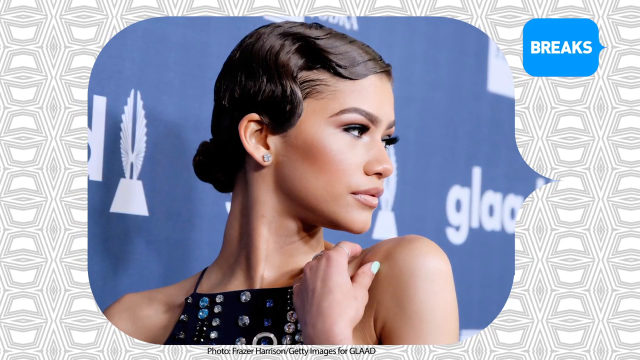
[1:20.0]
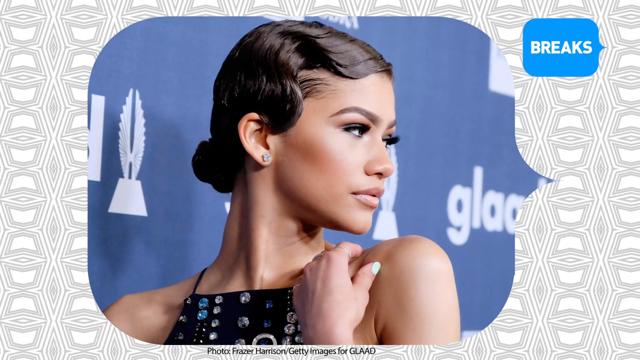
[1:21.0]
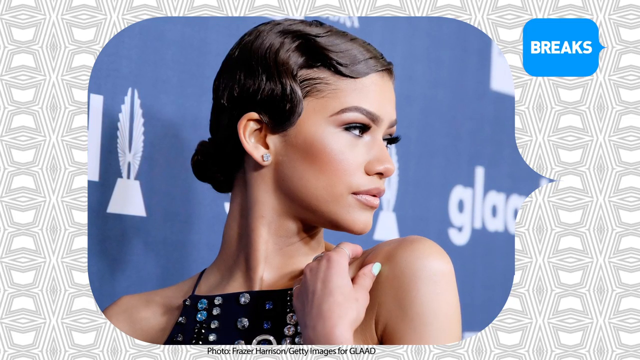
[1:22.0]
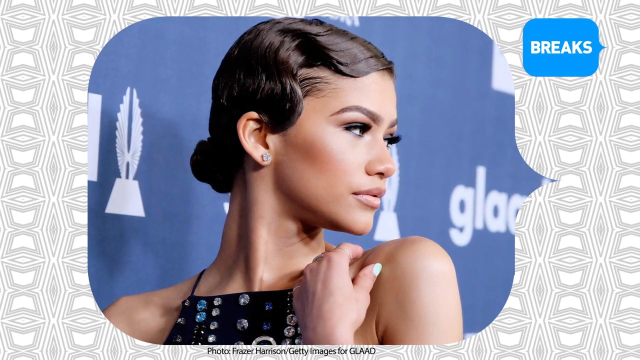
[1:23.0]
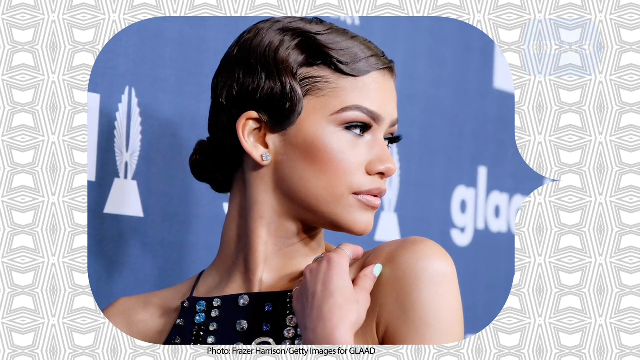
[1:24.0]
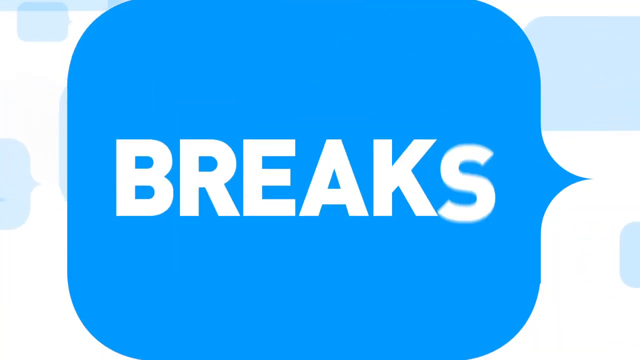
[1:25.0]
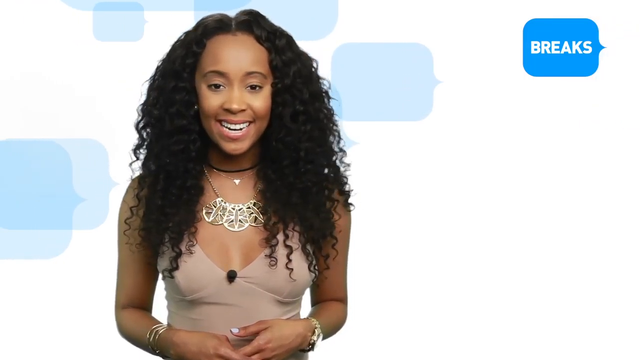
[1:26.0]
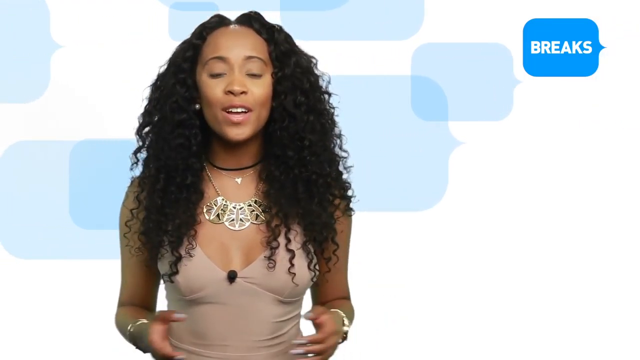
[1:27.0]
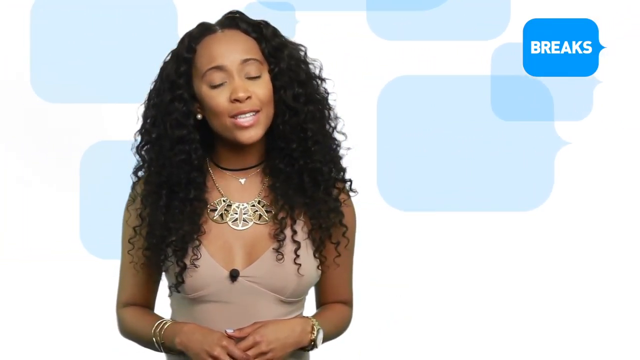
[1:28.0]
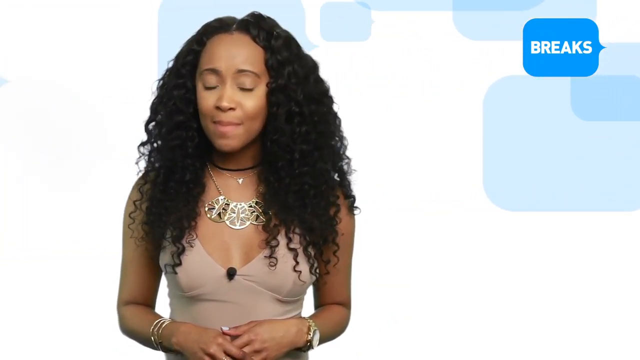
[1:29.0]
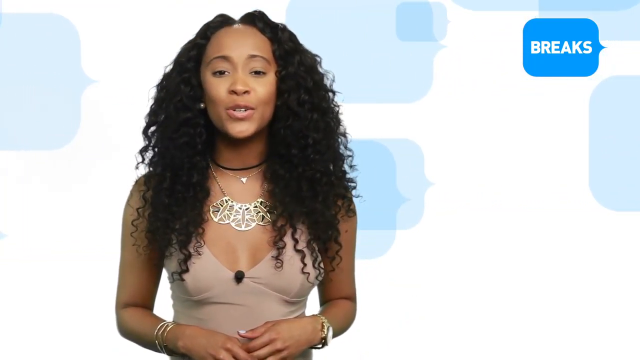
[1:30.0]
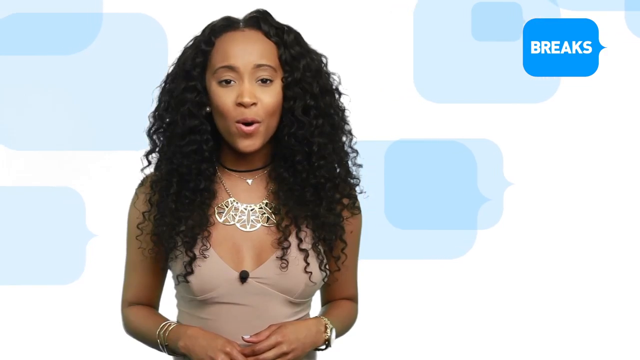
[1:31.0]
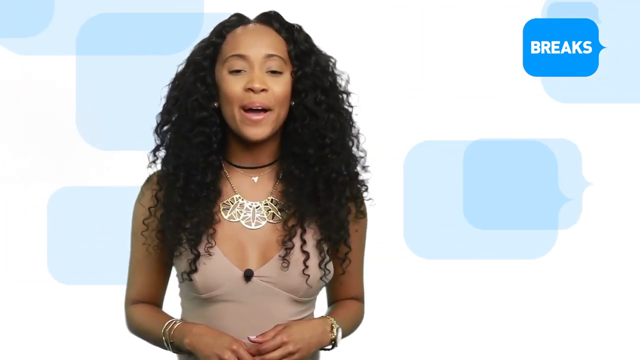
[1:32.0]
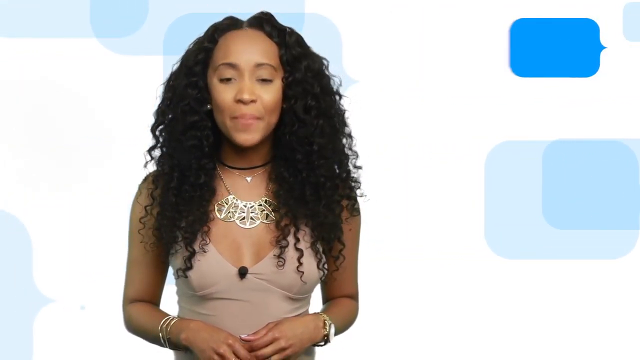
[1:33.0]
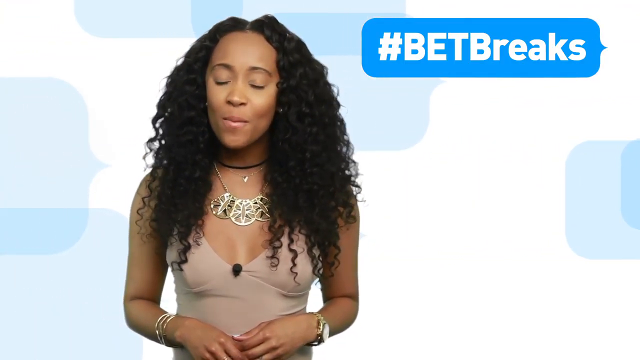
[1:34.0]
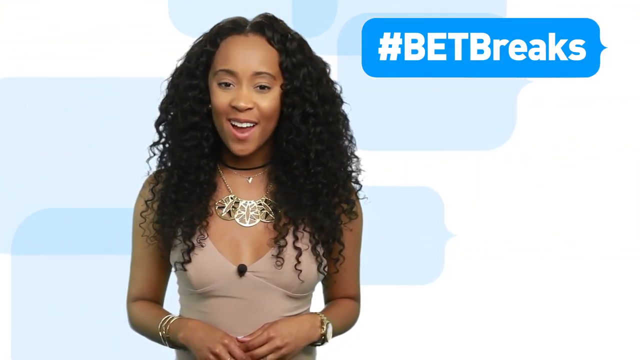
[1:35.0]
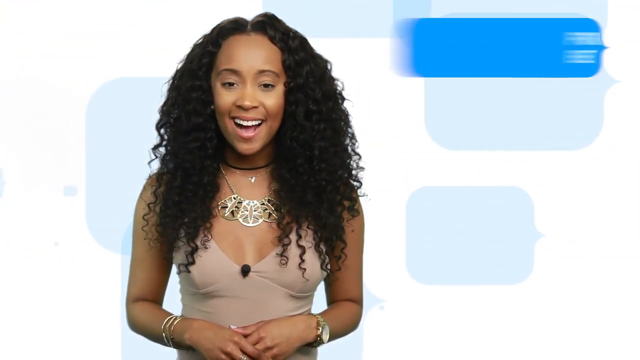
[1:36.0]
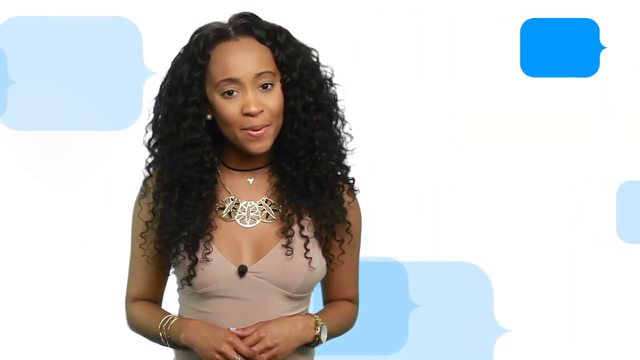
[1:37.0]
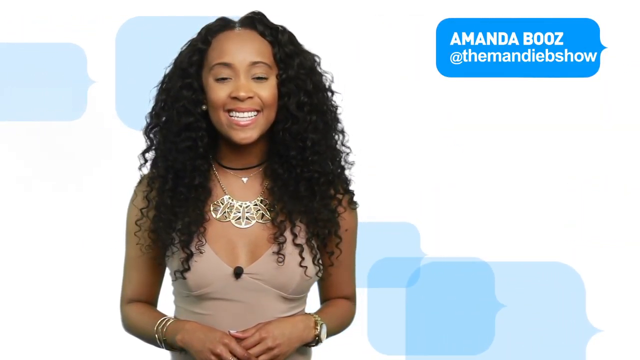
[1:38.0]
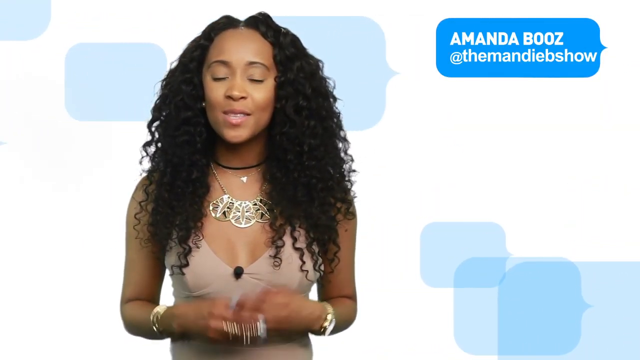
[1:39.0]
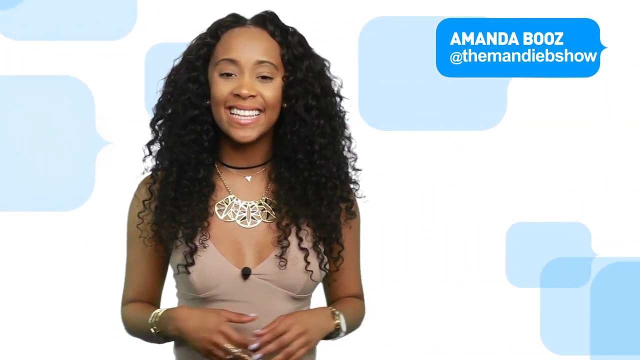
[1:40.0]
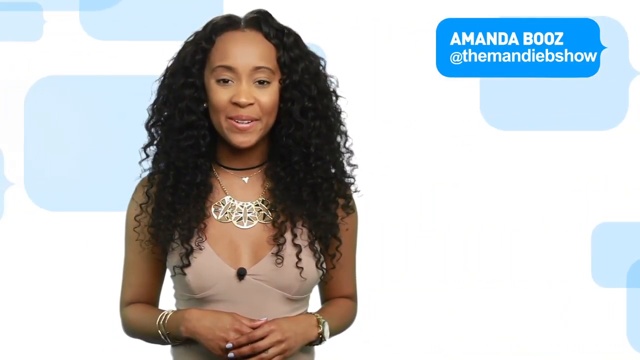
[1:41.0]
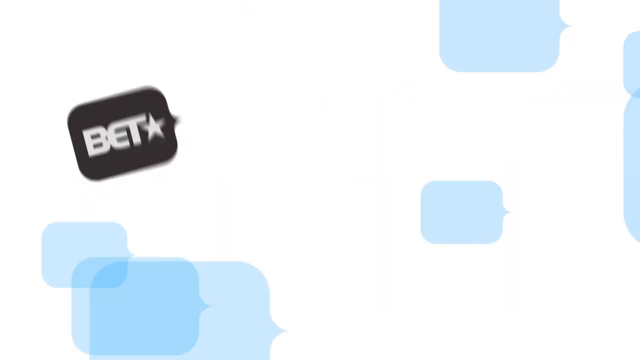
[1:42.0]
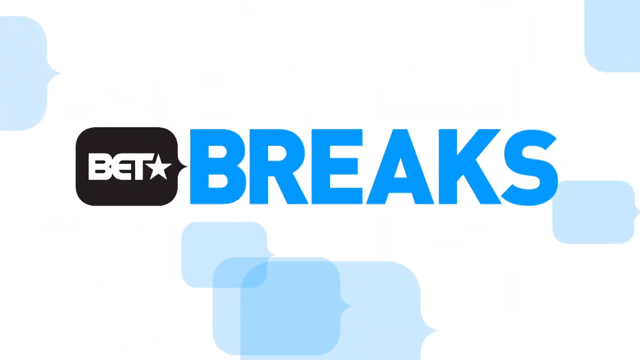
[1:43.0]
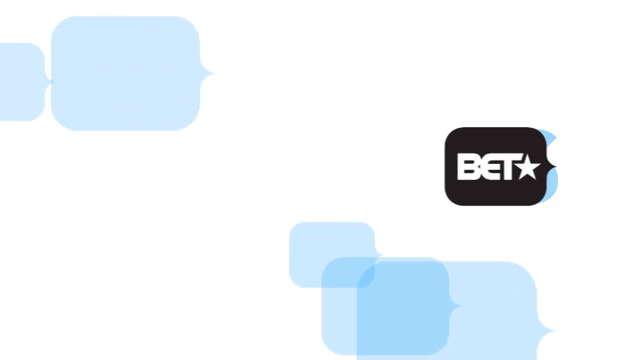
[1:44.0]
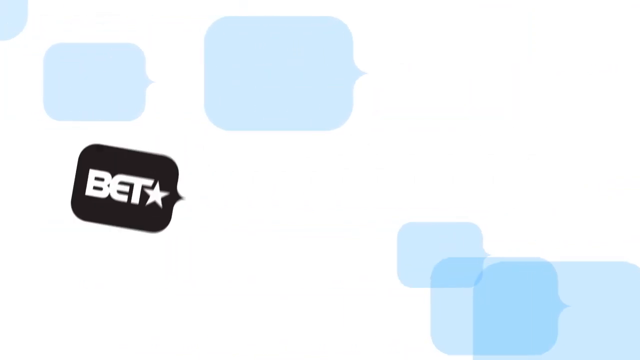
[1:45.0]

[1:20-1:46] The photo of the woman looking over her shoulder changes to the blue speech bubble with "breaks" in the middle, and the presenter appears just off to the left of centre of the screen. She talks to the camera, tilts her head to the left and then brings it back to centre, smiling as she talks. The blue speech bubble in the top corner is now longer and thinner and reads "#bet breaks". It then changes to say "for more head over to bet.com right now", and then changes to "Amanda Booz @themandiebshow". She smiles at the camera and lowers her arms. The screen then changes to the opening screen seen at the beginning: a white background with blue speech bubbles moving from left to right, the black speech bubble with "BET" and a star, and the word "BREAKS" appearing next to it in capital letters. The BET speech bubble moves across to the right of the screen, and as it does the word "BREAKS" disappears behind it. It then moves back to the left of the screen and the screen goes black.